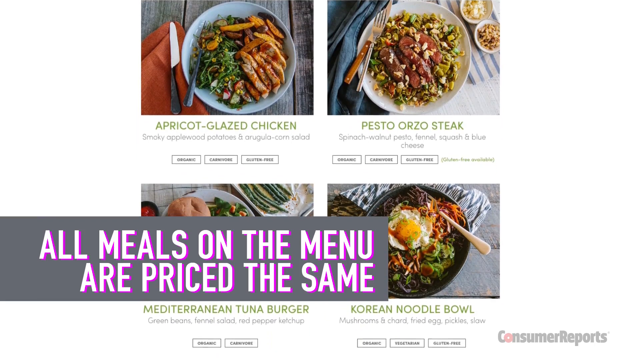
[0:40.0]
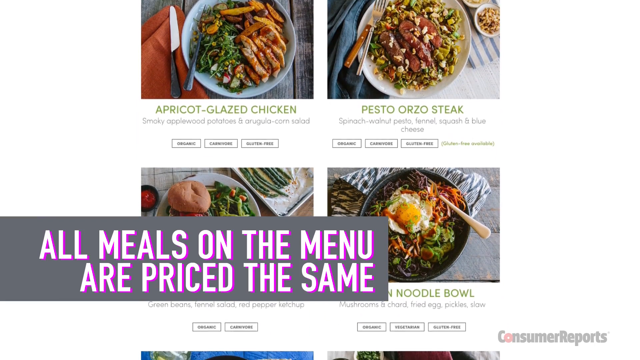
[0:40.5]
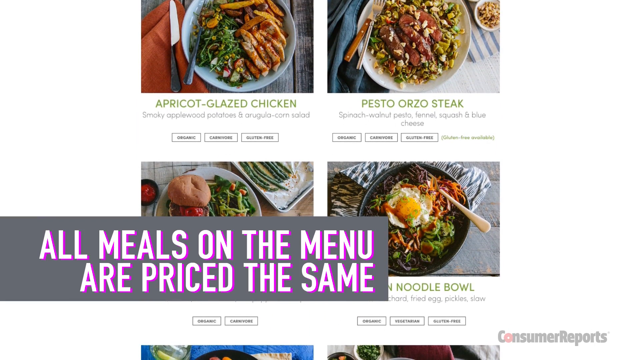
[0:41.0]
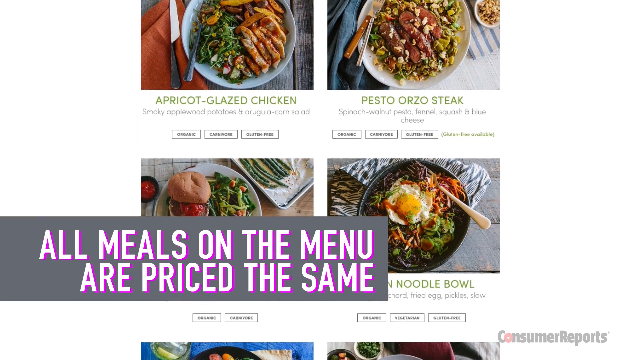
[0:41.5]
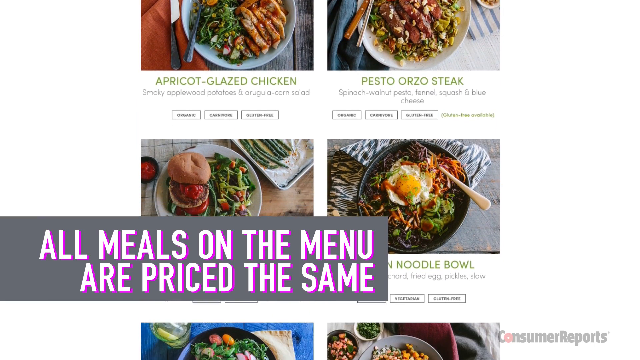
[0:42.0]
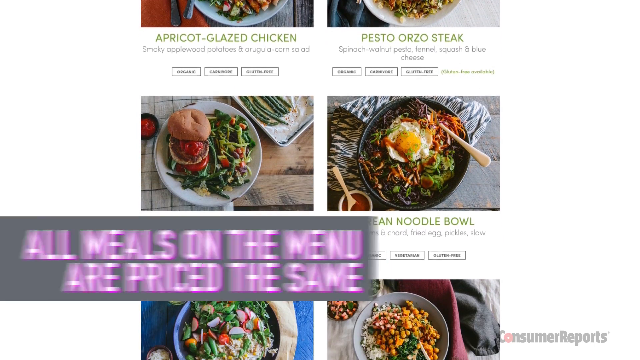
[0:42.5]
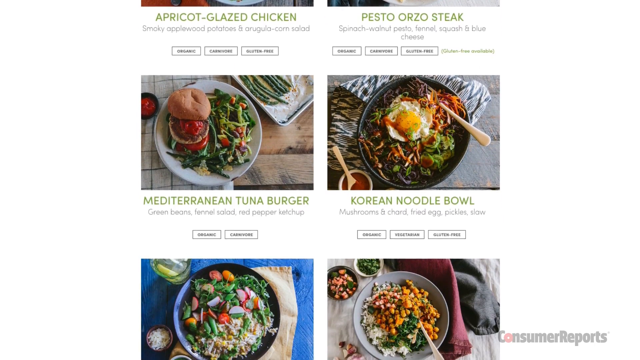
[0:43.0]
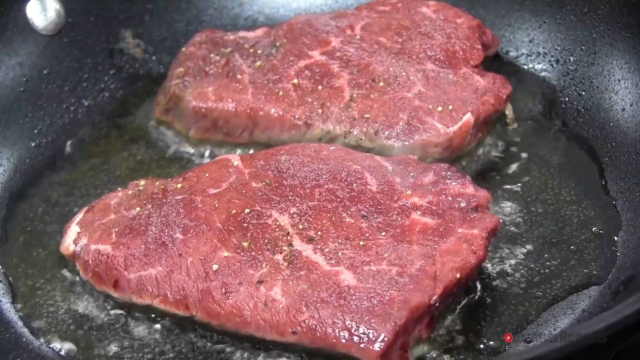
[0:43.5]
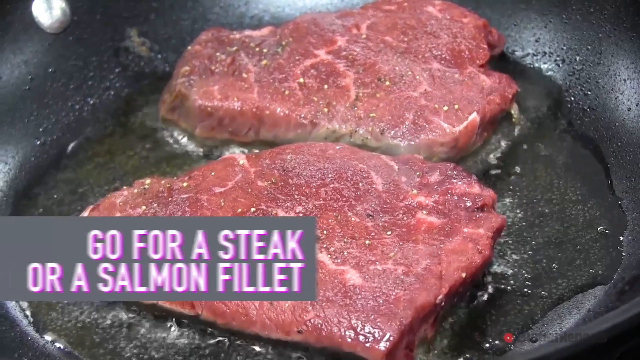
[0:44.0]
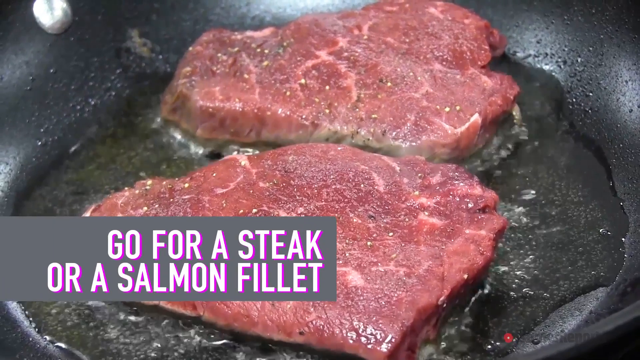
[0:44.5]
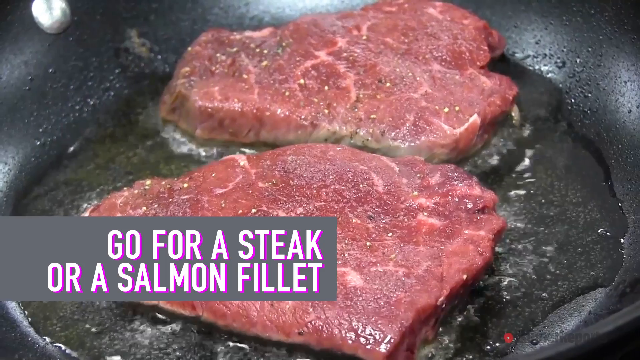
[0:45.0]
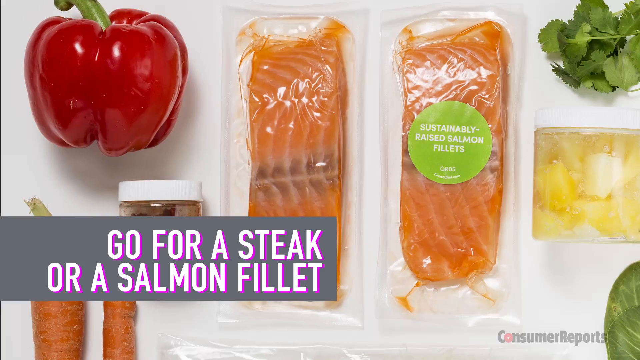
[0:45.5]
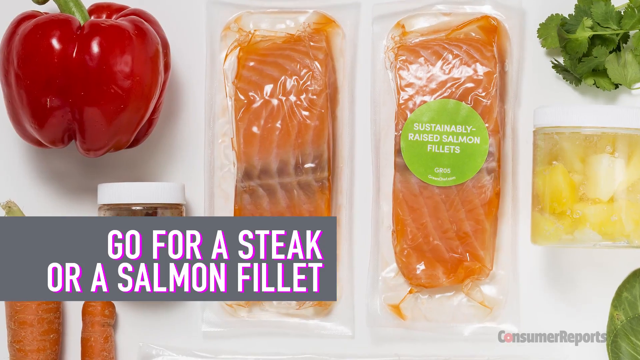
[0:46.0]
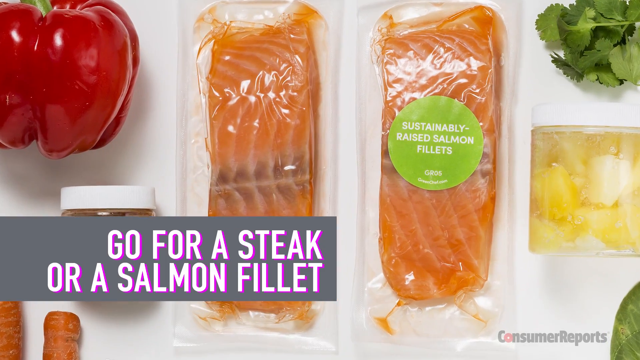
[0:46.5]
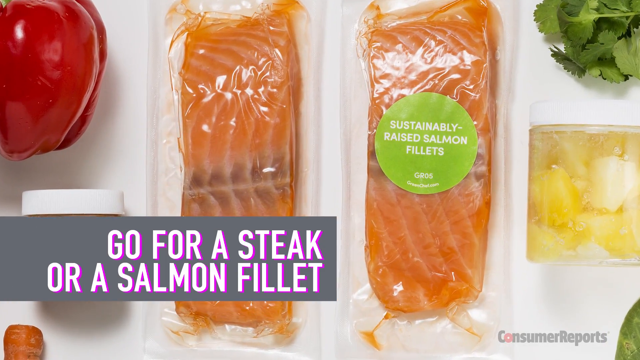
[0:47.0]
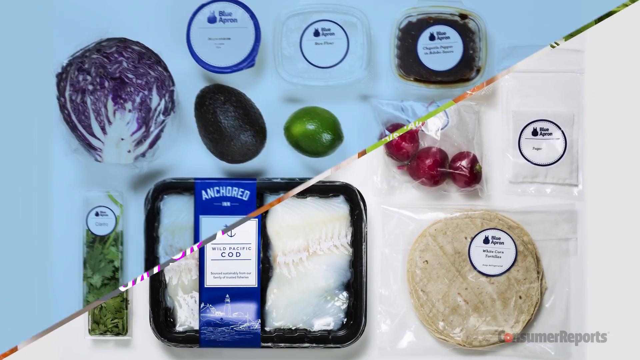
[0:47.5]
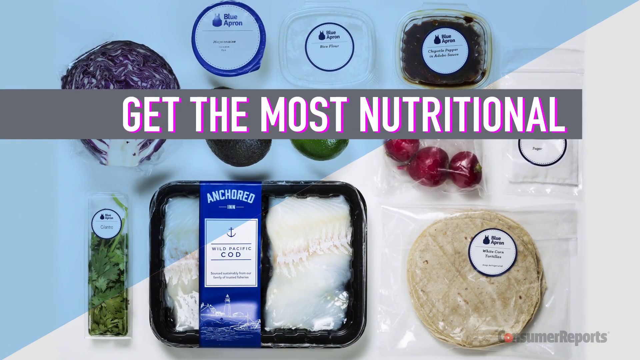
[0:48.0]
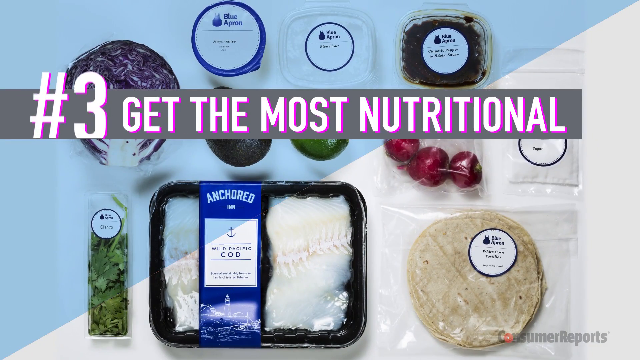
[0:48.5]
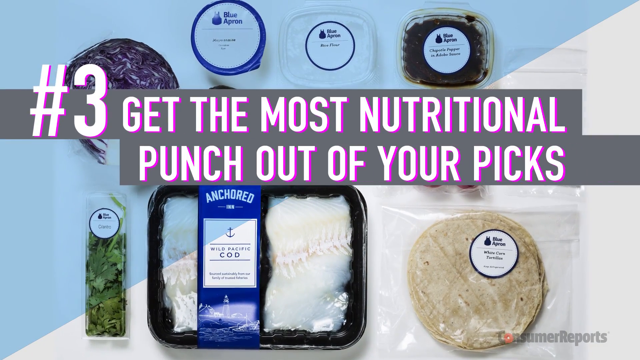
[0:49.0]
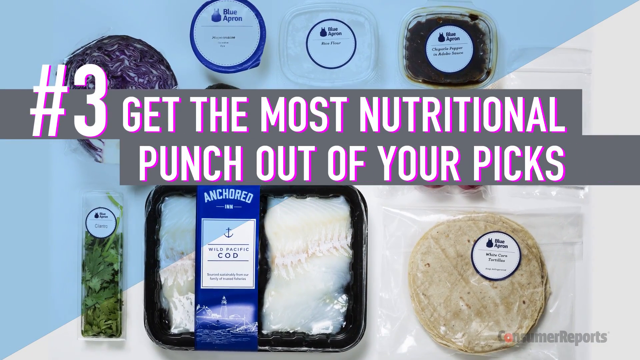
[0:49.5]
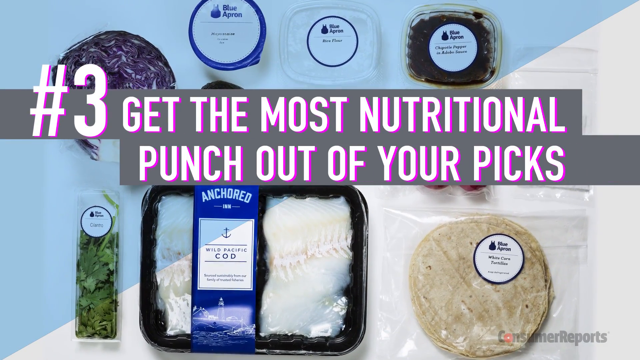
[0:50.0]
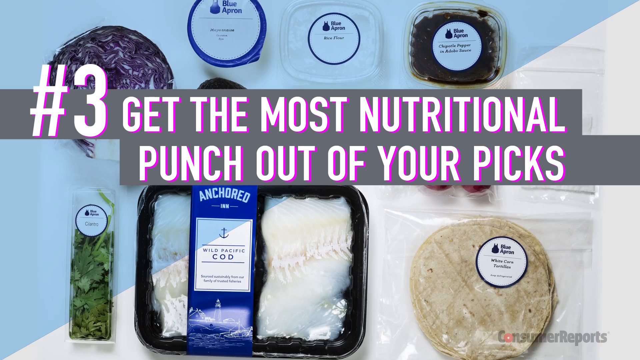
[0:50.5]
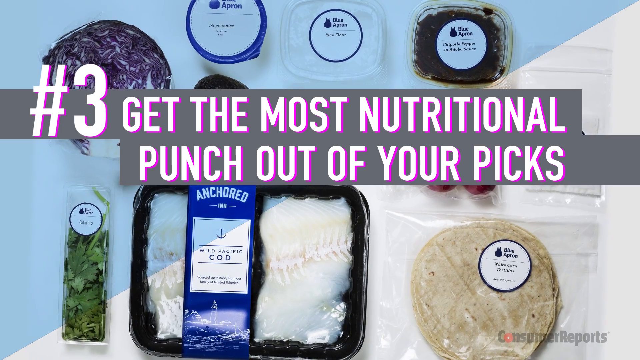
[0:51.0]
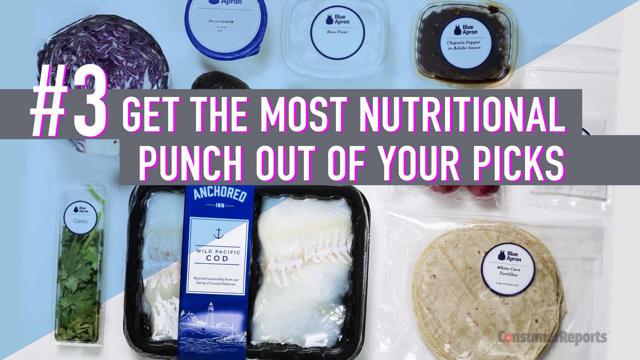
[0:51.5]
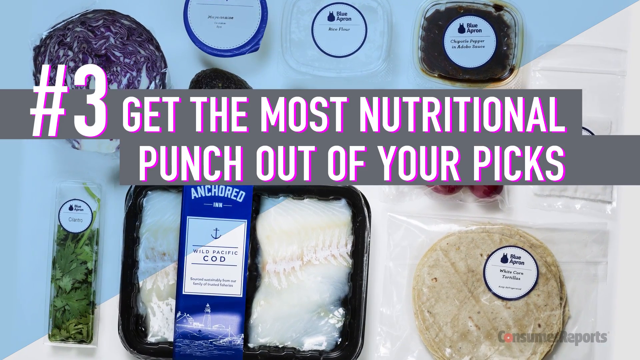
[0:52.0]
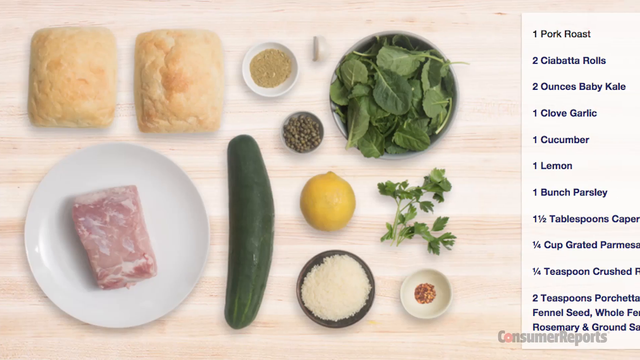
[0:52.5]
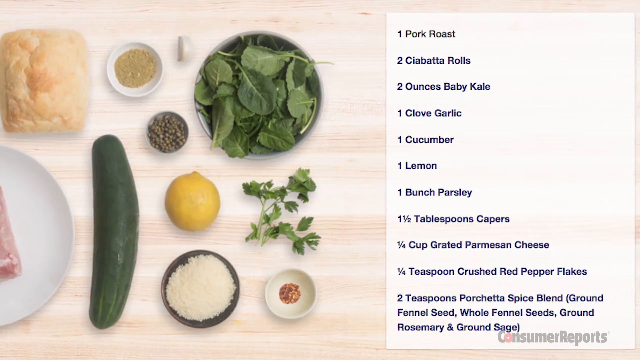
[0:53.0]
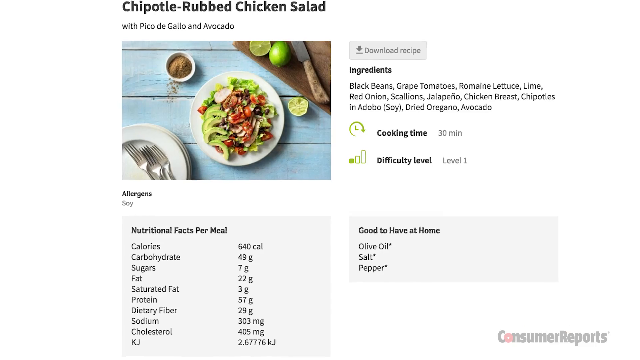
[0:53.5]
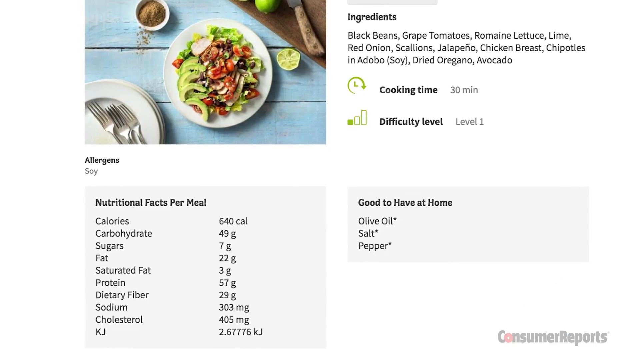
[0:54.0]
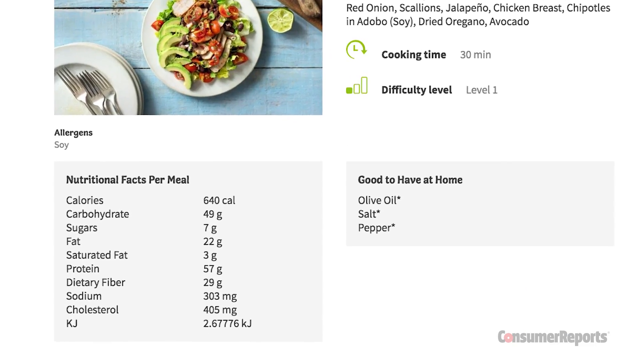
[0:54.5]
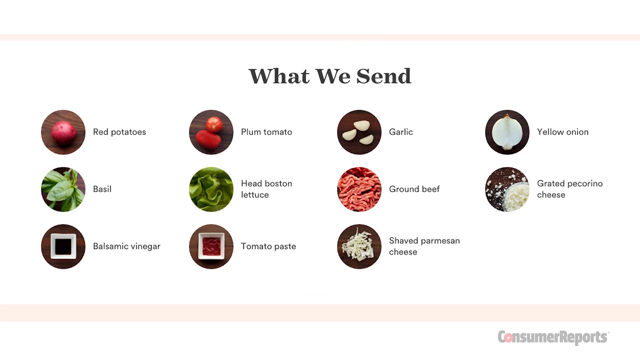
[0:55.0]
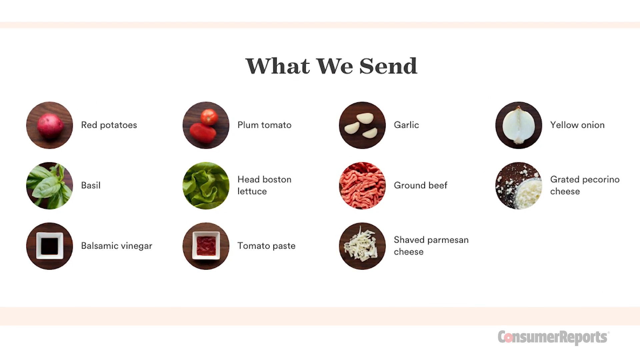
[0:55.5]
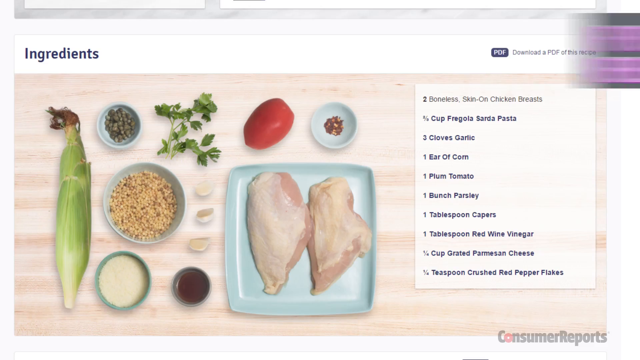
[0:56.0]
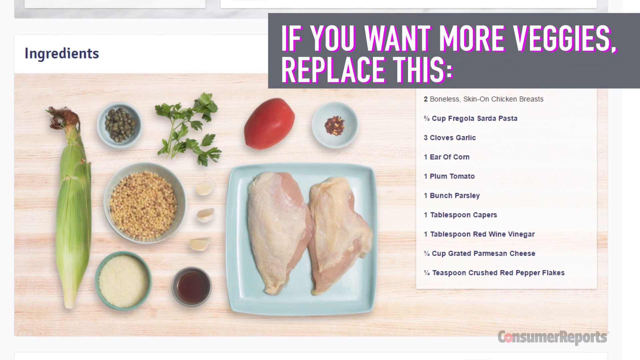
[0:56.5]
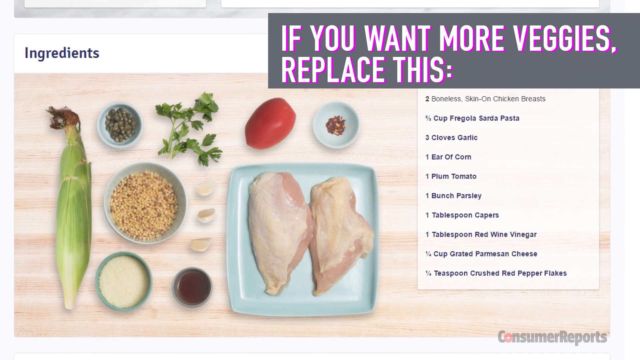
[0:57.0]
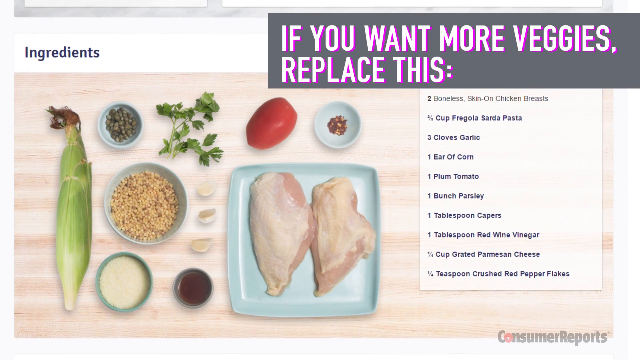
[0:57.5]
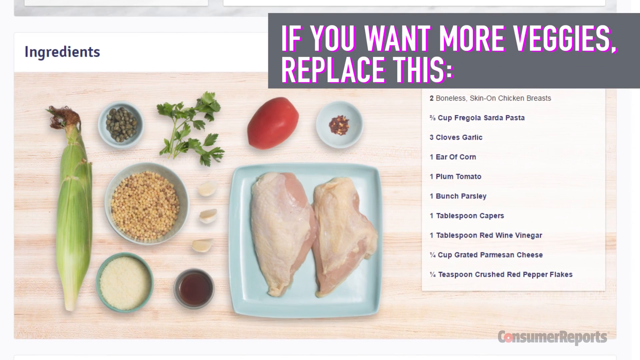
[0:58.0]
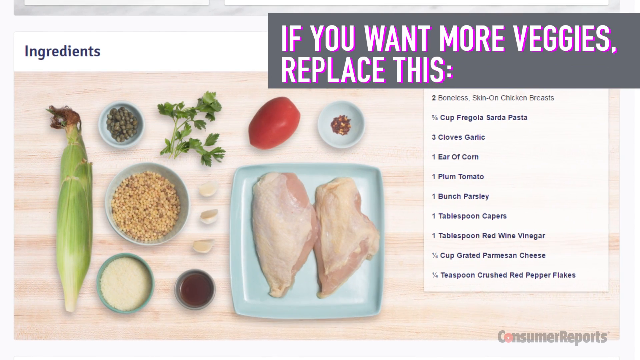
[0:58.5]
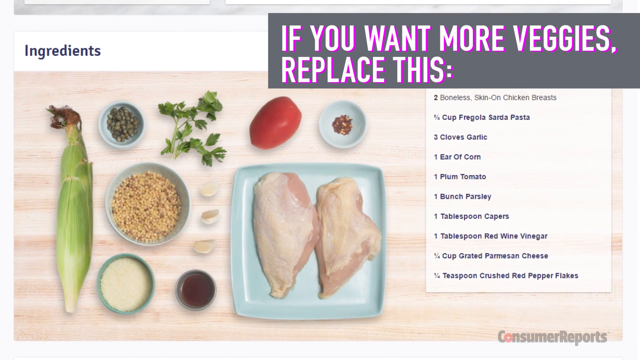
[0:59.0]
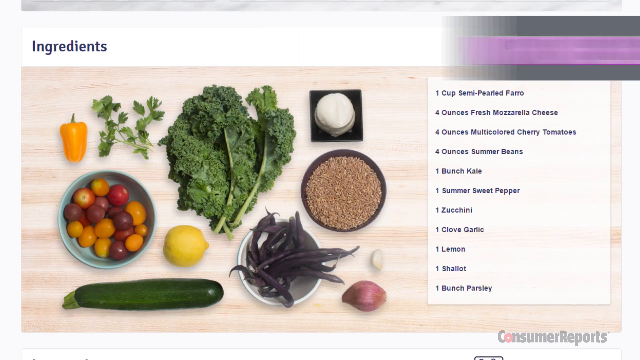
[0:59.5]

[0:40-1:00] A web page shows different meals. From the top left: "apricot glazed chicken", with "smoky applewood potatoes in a Salad" underneath, and to the right "pesto orzo steak". Spinach, pasta, squash and blue cheese are visible. Below that, big white letters with purple outlines read "all meals on the menu are priced the same". Underneath are a Mediterranean tuna burger and, to its right, a Korean noodle bowl. Two steaks are then shown being cooked in a pan, and text at the bottom left reads "go for a steak or a salmon filet".